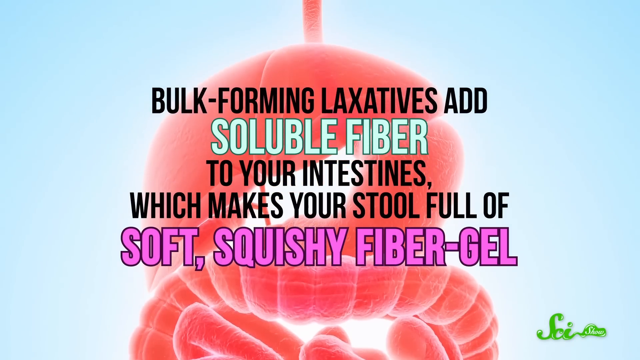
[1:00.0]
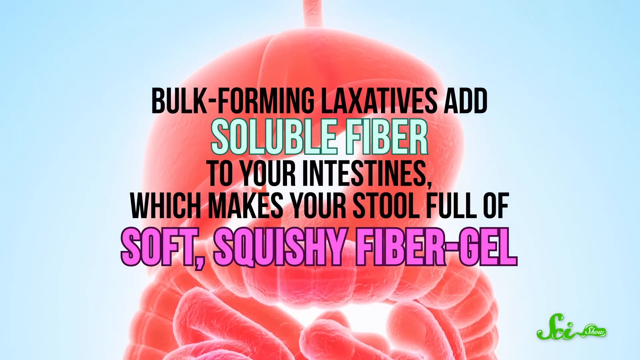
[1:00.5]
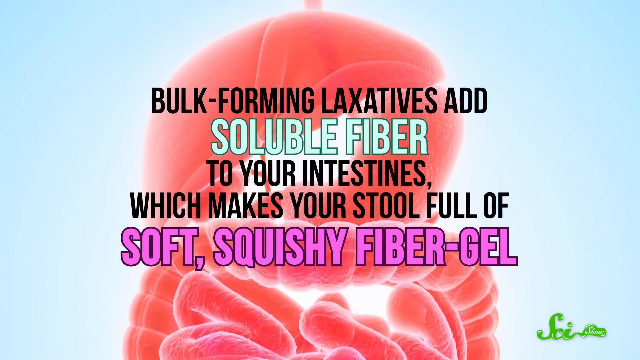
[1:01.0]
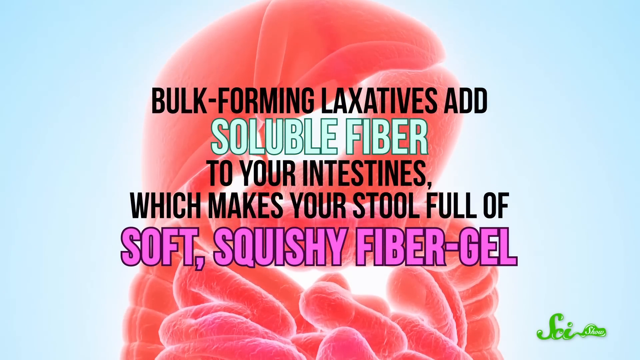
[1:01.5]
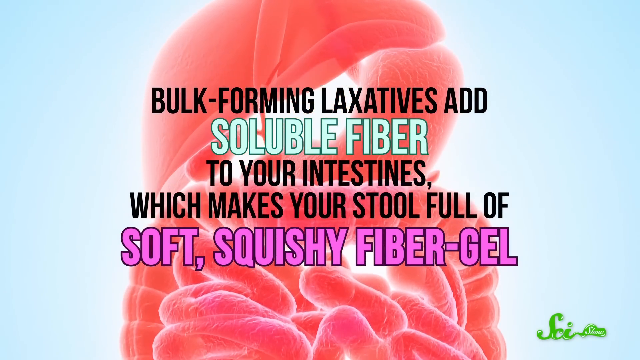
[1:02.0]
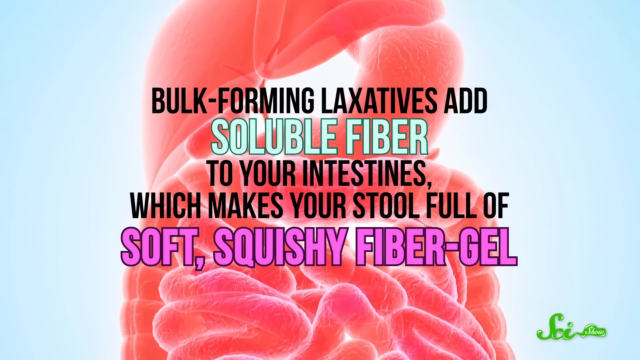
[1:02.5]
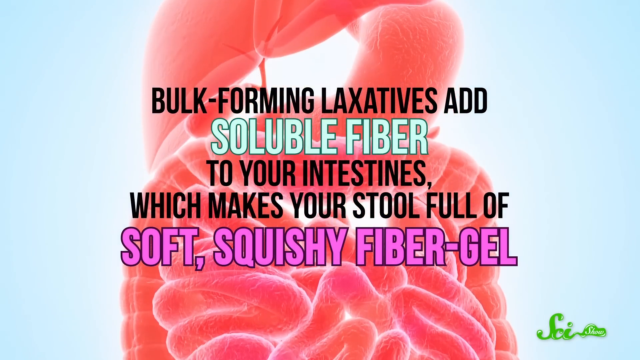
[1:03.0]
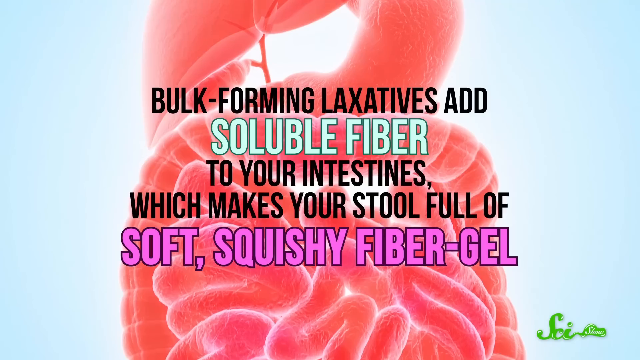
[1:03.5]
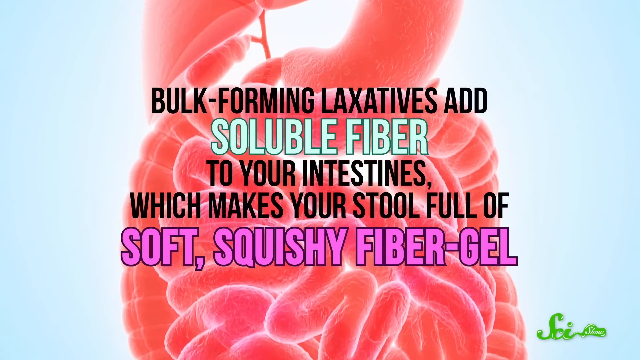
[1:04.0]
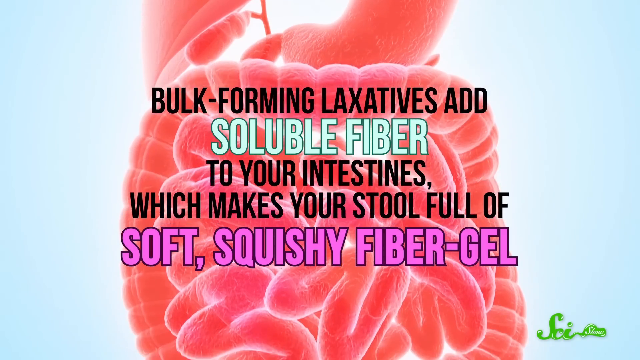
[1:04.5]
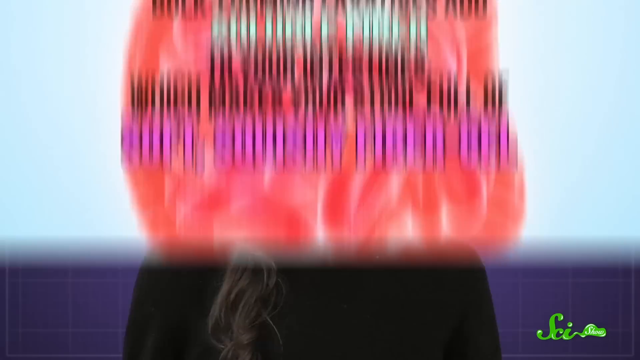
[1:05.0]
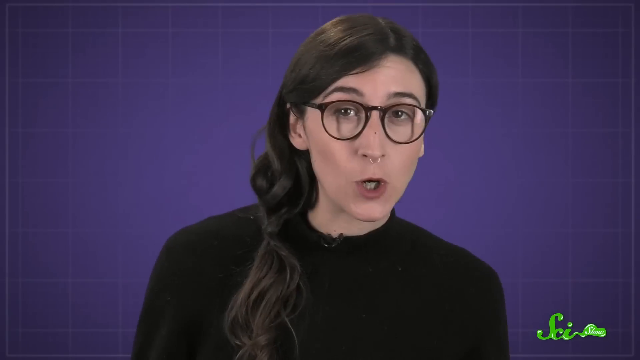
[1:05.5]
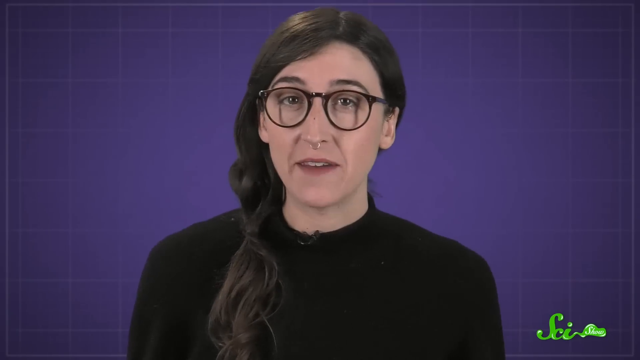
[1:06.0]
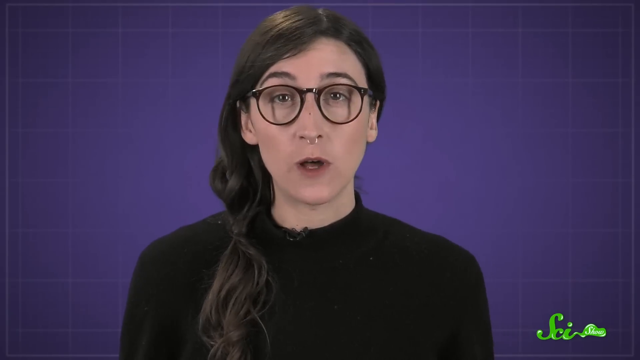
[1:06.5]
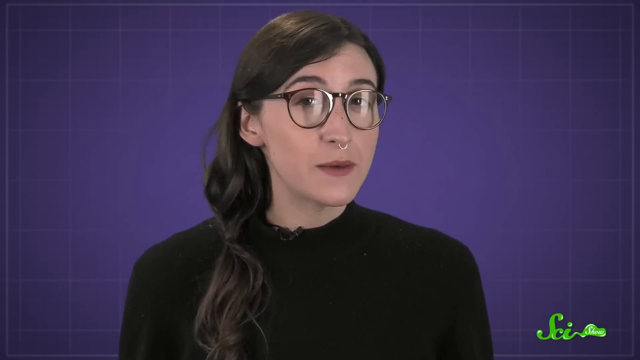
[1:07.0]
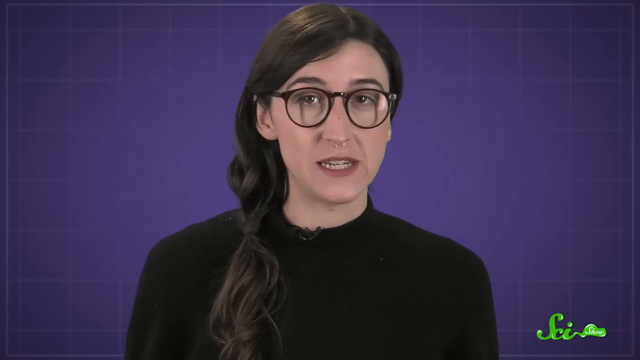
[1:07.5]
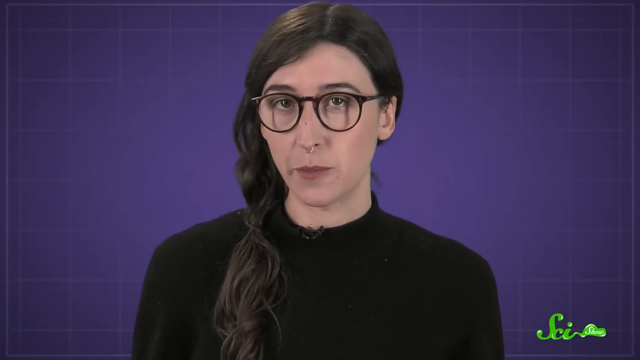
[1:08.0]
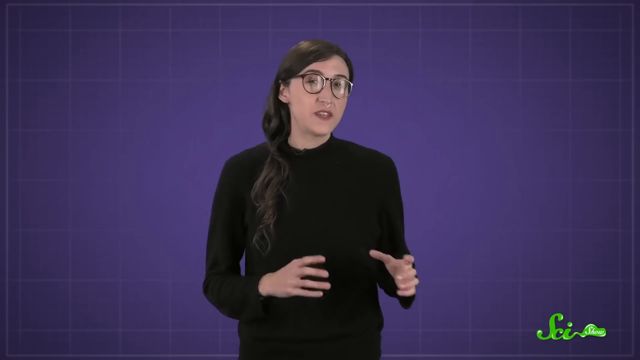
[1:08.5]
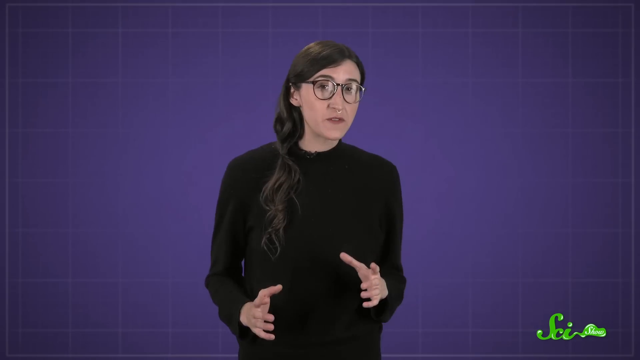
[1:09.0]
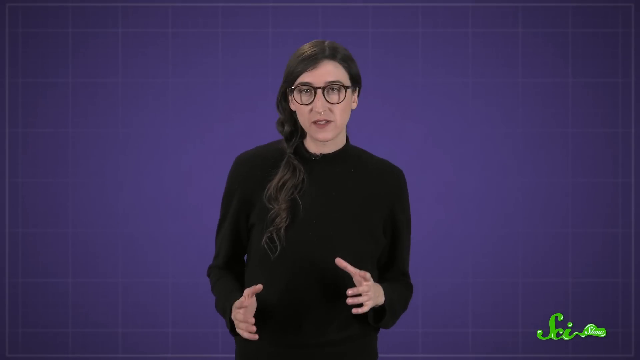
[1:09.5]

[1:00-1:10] On-screen text reads "bulk forming laxatives add soluble fiber to your intestines which makes your stool full of soft squishy fiber gel." A pink, soft, kind of monsterish-looking thing appears that looks like an intestine; it shows a good intestine, clean and pink. The woman who has been speaking then returns and is speaking again.